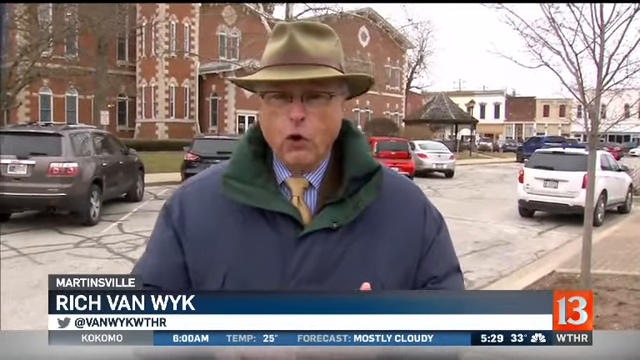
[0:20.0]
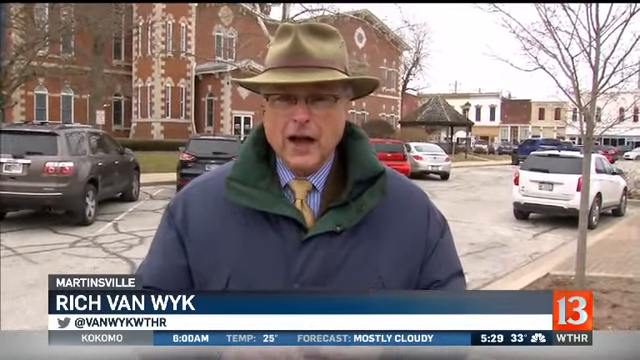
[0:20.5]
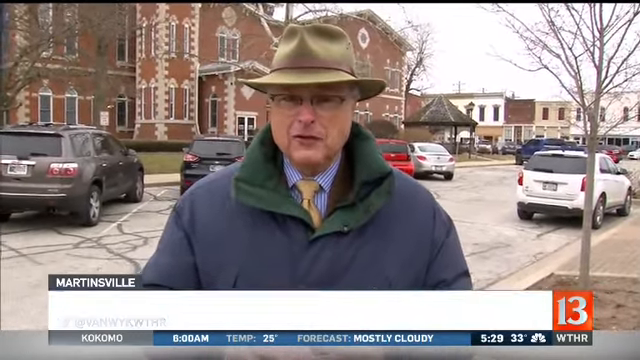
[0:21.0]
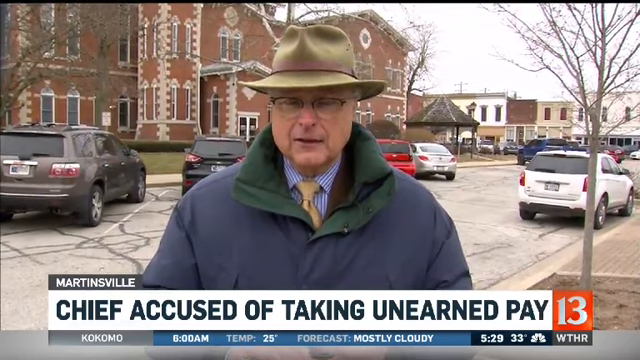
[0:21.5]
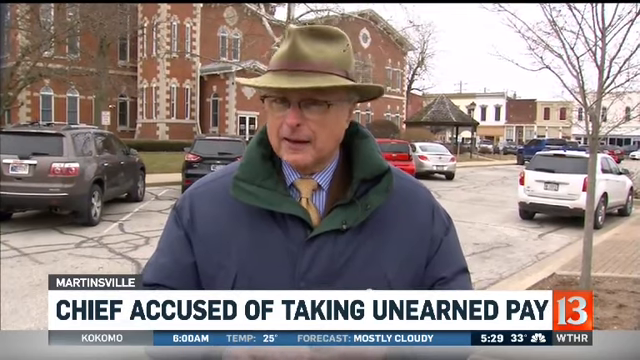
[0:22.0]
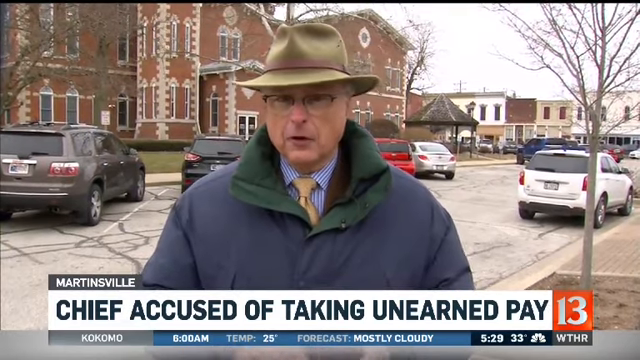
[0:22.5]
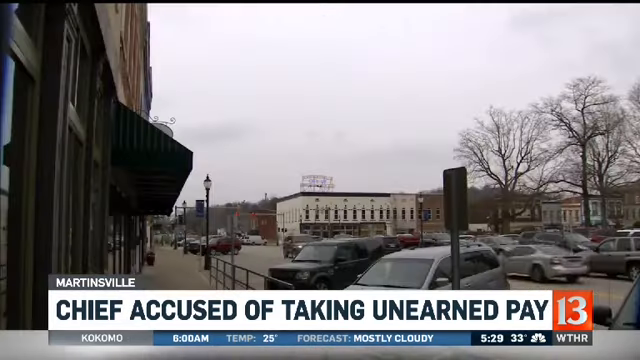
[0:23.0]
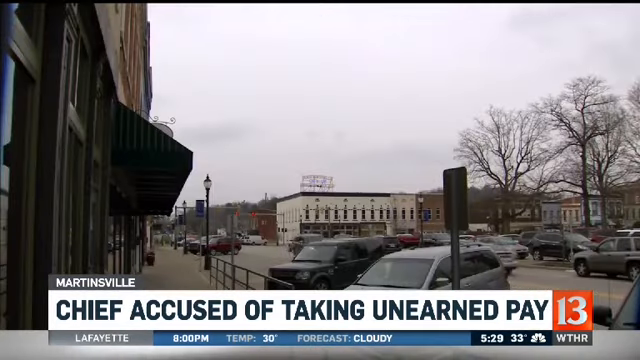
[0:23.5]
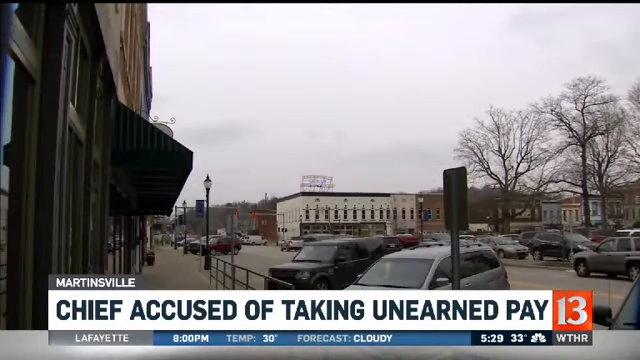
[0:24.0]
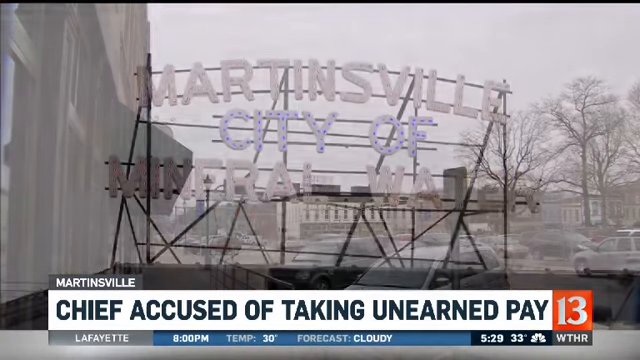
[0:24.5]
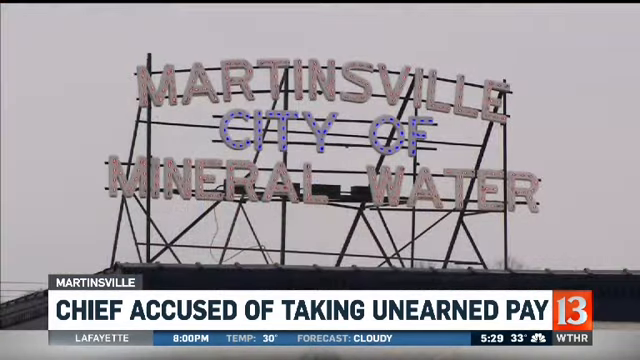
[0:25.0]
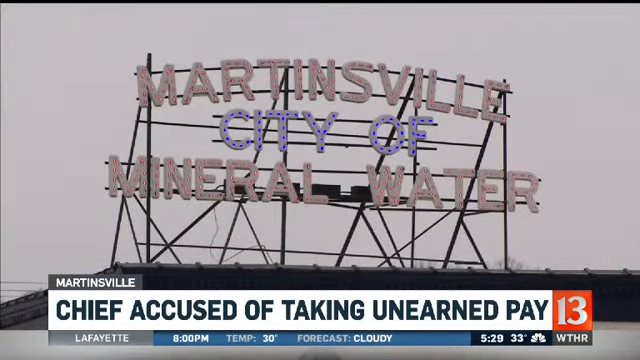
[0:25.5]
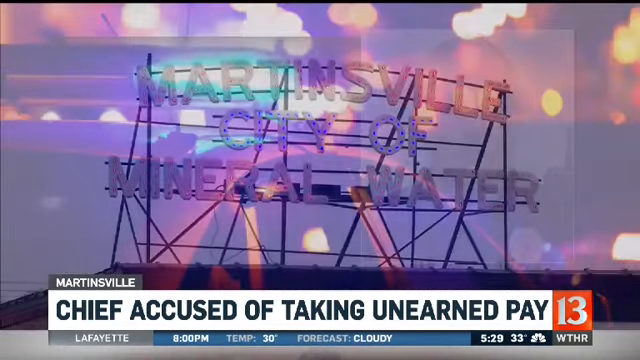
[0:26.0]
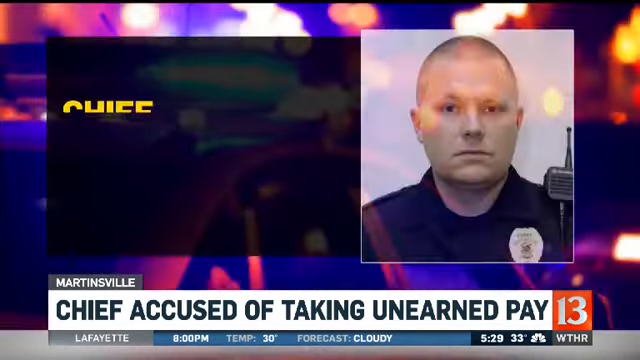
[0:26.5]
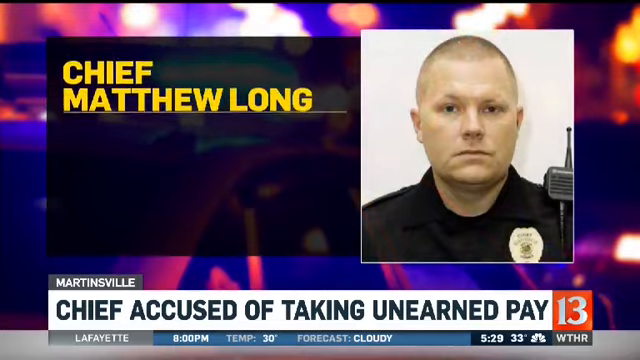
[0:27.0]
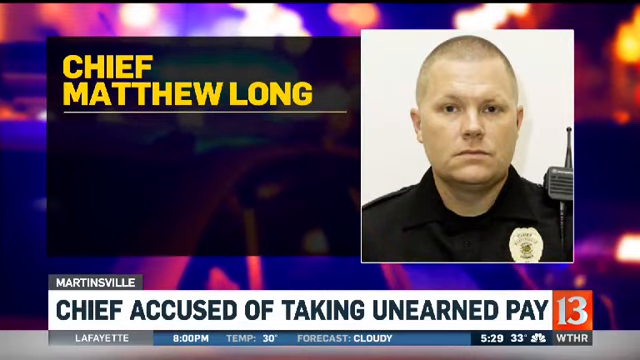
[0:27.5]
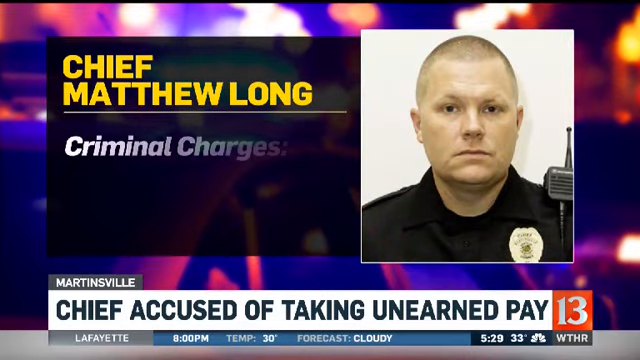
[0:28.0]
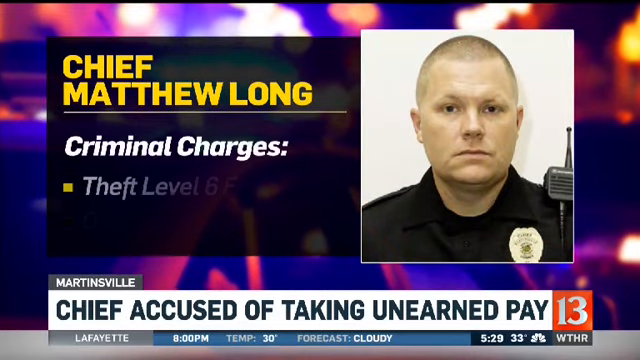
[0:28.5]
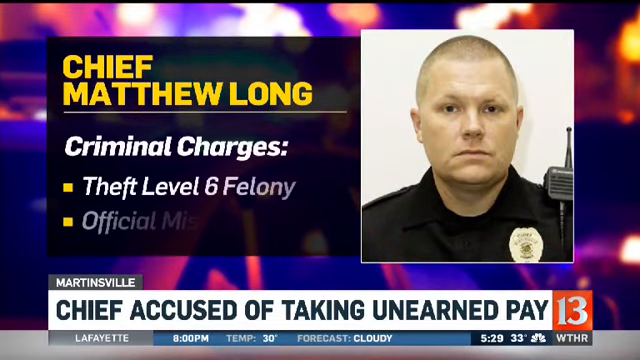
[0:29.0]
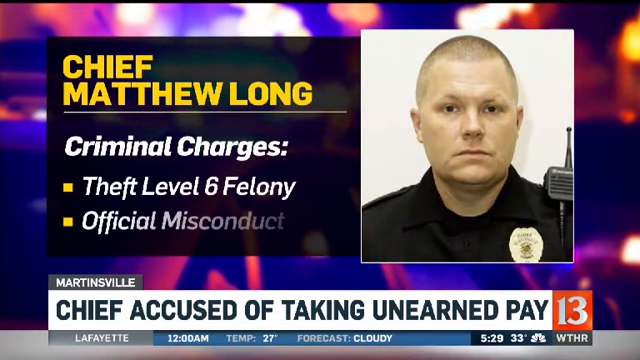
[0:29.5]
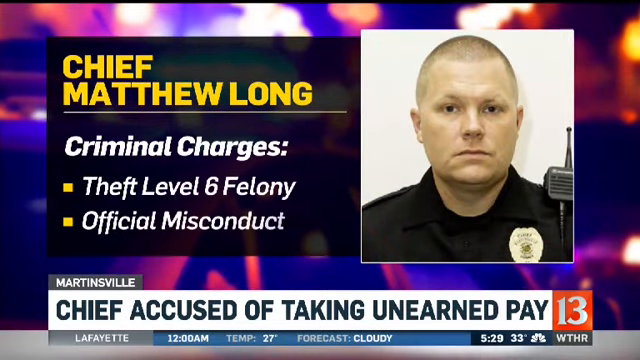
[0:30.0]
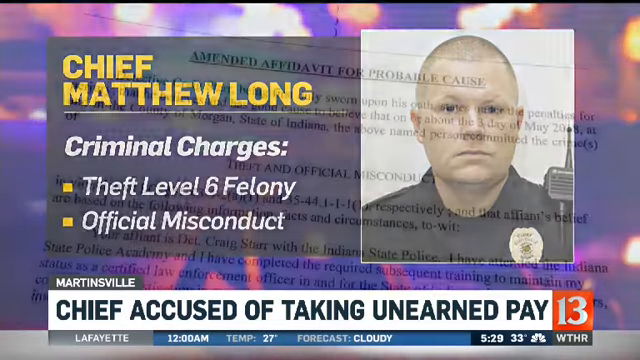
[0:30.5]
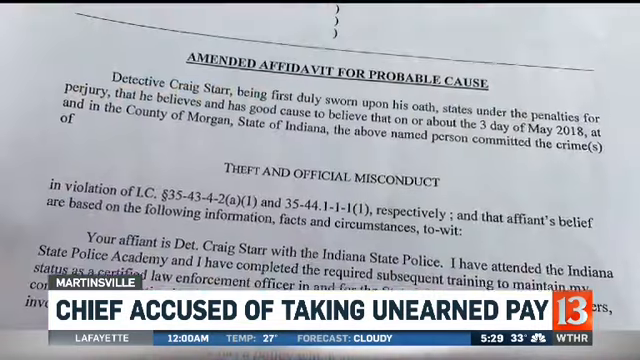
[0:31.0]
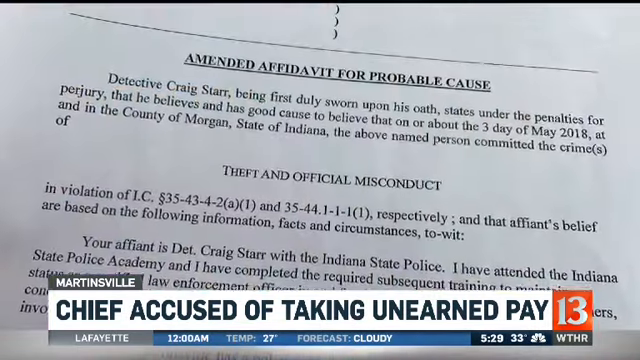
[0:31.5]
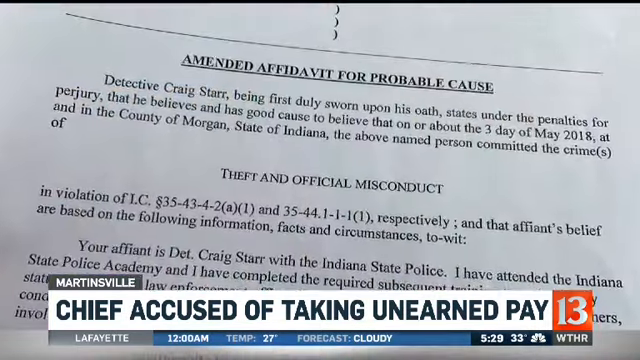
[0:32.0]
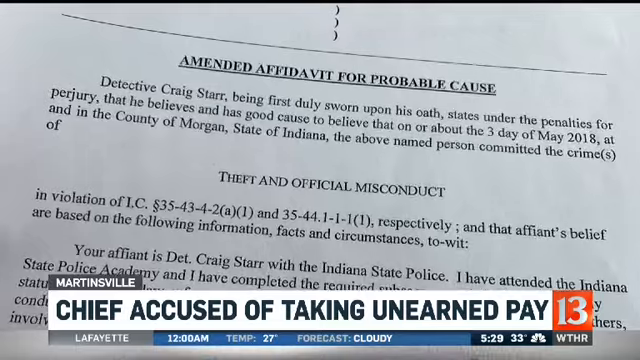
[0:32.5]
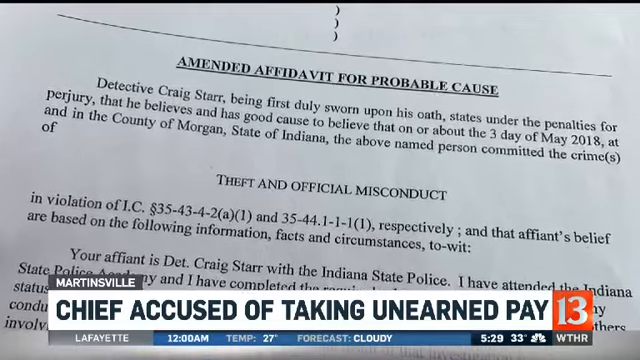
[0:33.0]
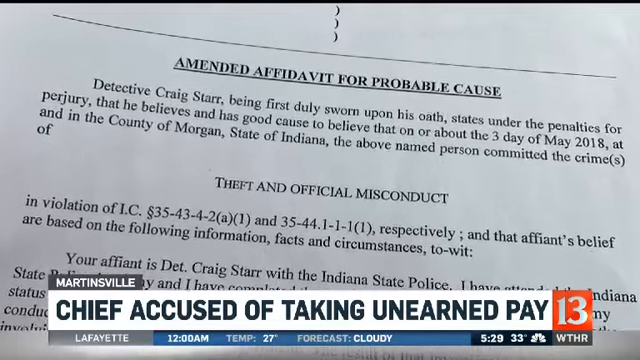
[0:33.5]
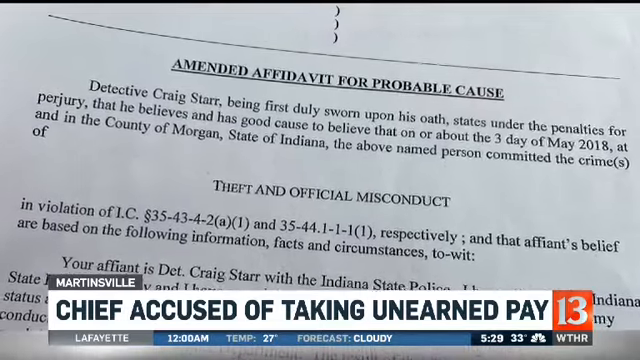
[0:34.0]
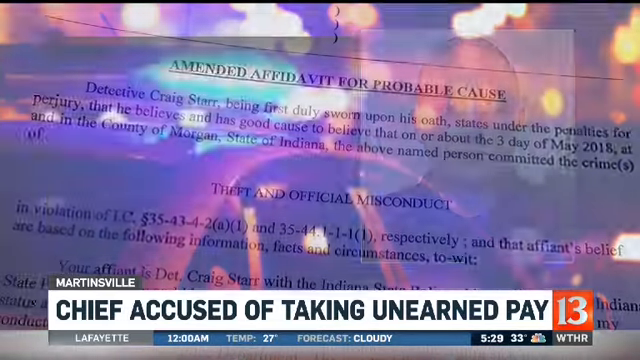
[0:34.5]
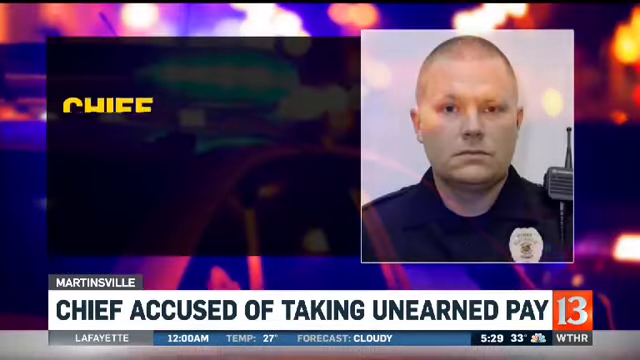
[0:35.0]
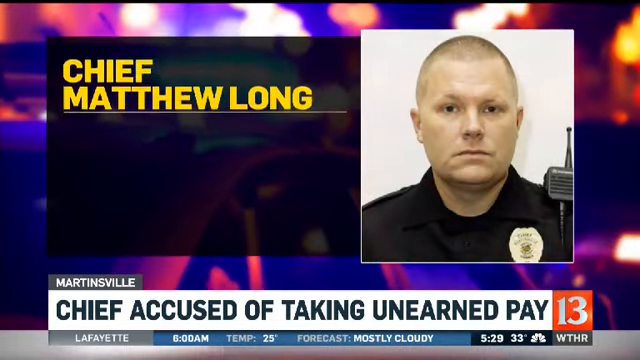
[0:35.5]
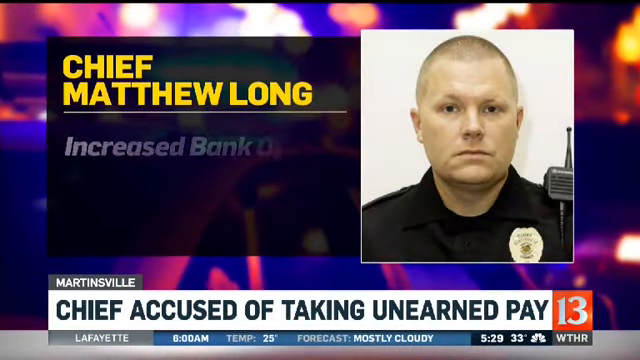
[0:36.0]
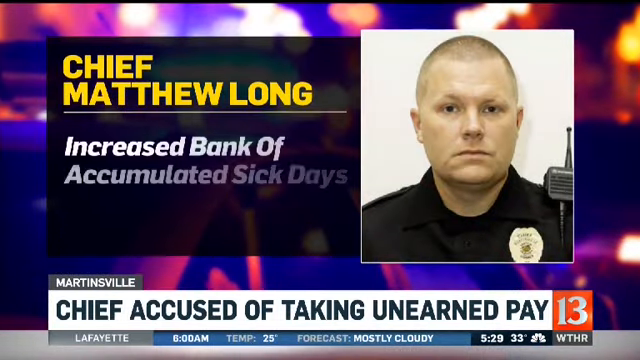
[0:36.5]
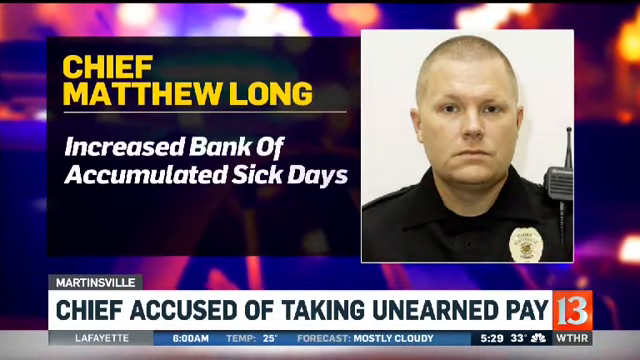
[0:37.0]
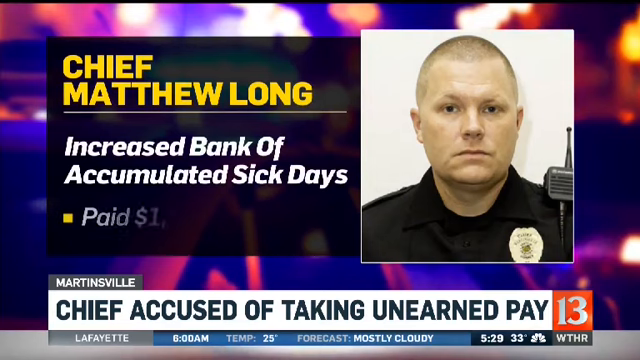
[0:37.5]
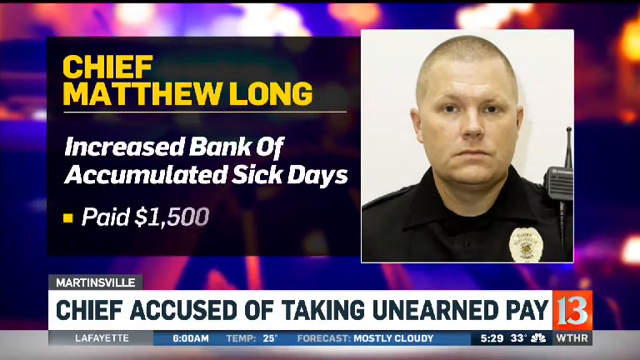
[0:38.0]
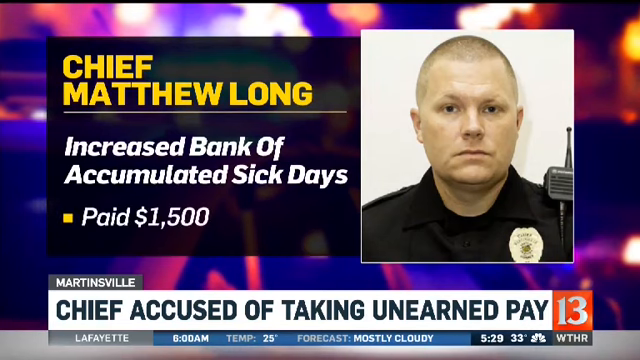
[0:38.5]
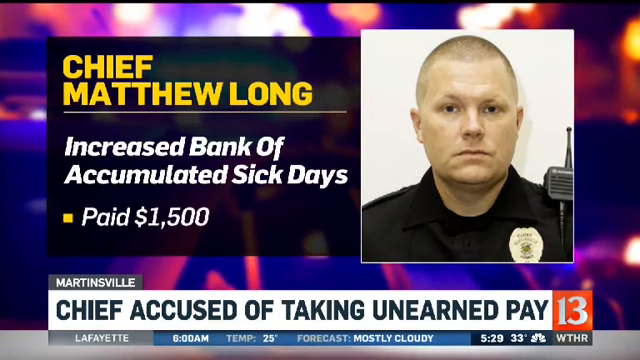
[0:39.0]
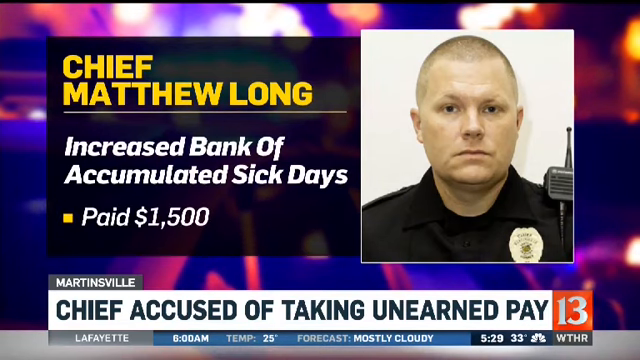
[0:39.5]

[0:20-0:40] The guy continues talking to the camera on the street, and then the video cuts to footage of a sign reading "The Martinsville Suite of Mineral Water." It then cuts to a photo of the police officer with what looks like a mugshot on the left-hand side. A title in yellow text reads "Chief Matthew Long," and beneath it white text says "criminal charges." Yellow bullet points follow, with white text reading "theft, level 6 felony" and below that "official misconduct." The video fades to a picture of a piece of paper that says "amended affidavit for probable cause," and zooms slightly further into the photo. It then cuts to a similar format, with the officer on the right and what looks like the charges on the left, this time reading "increased bank of accumulated sick days" and "paid $1,500."